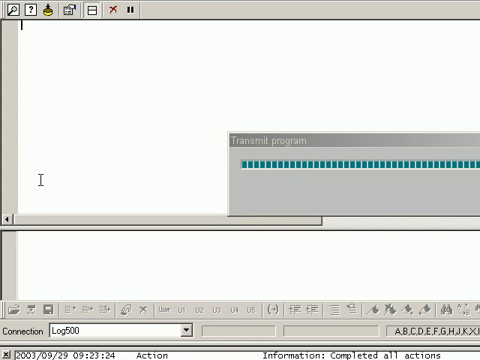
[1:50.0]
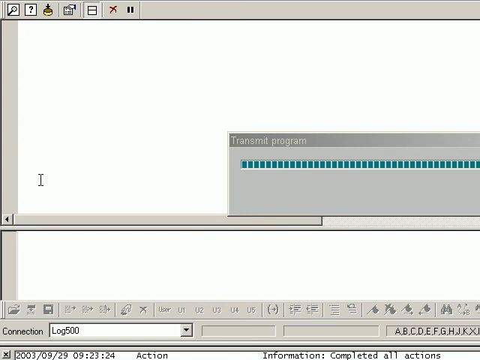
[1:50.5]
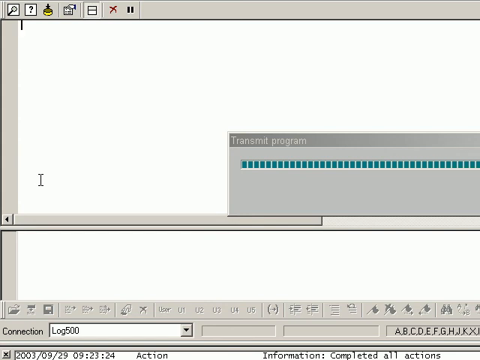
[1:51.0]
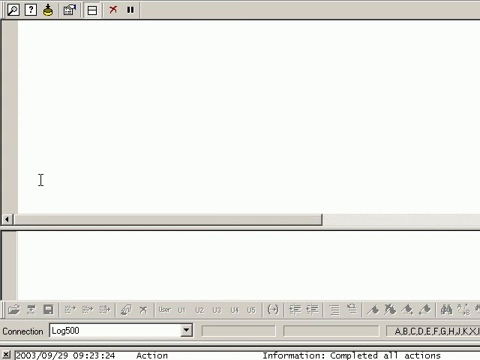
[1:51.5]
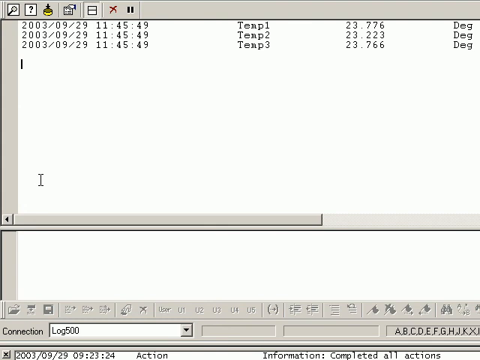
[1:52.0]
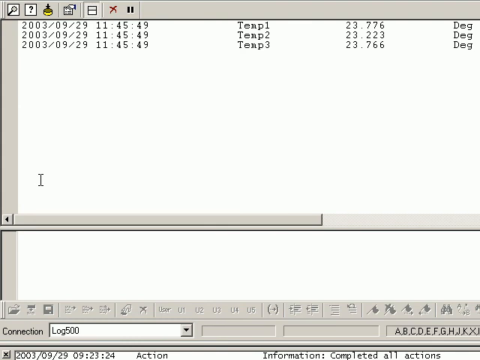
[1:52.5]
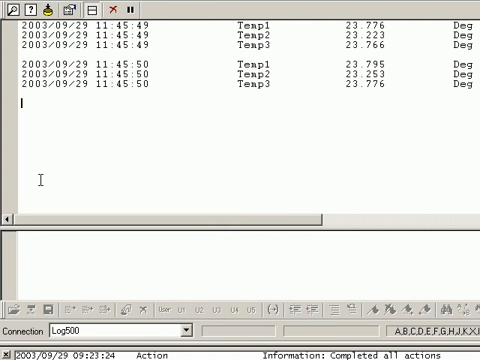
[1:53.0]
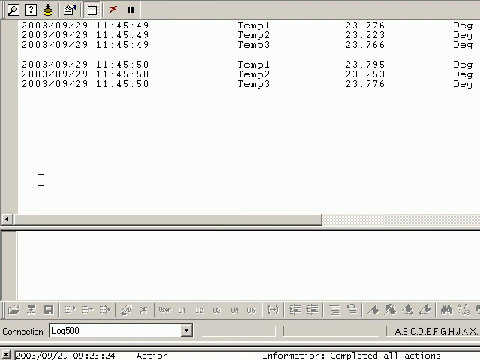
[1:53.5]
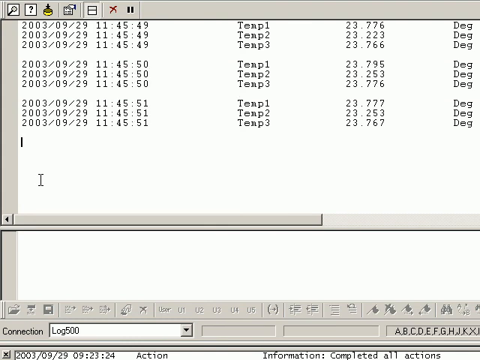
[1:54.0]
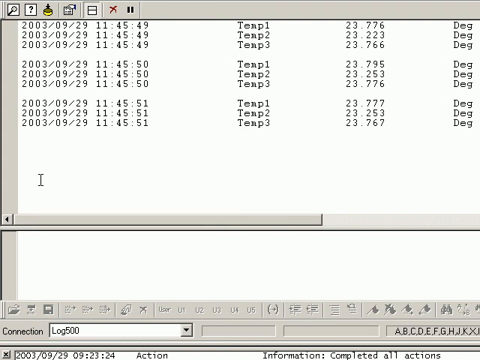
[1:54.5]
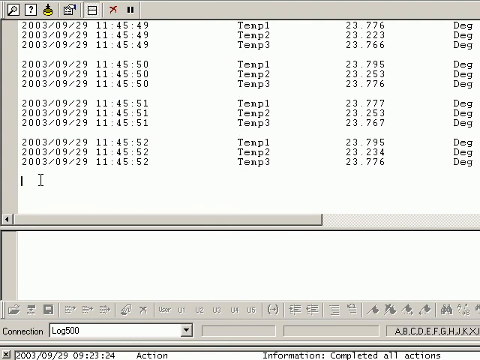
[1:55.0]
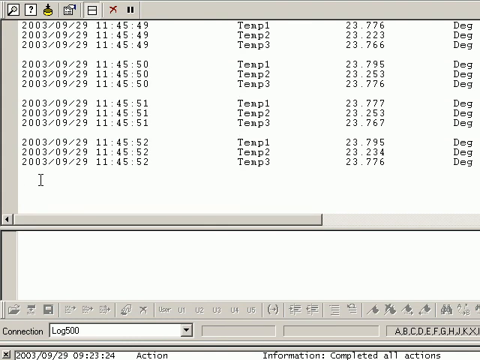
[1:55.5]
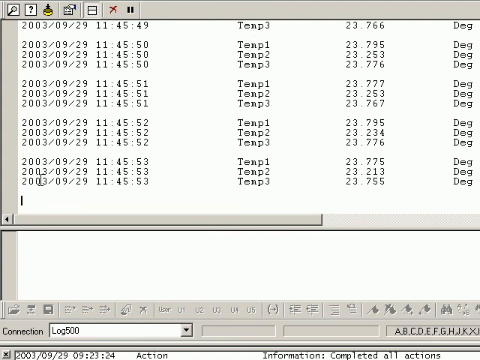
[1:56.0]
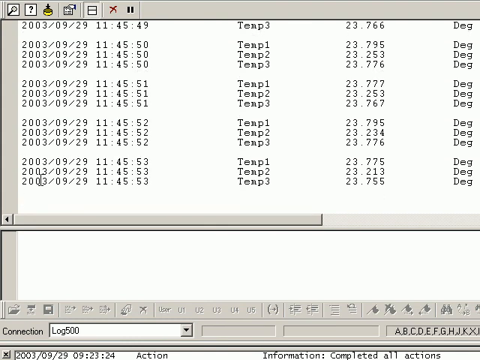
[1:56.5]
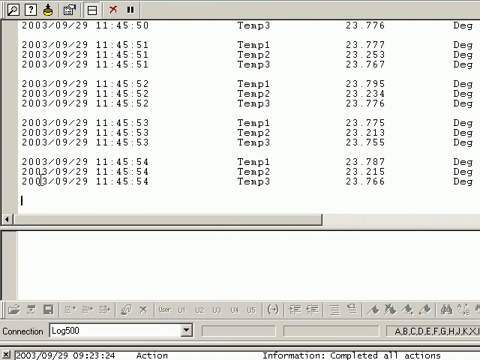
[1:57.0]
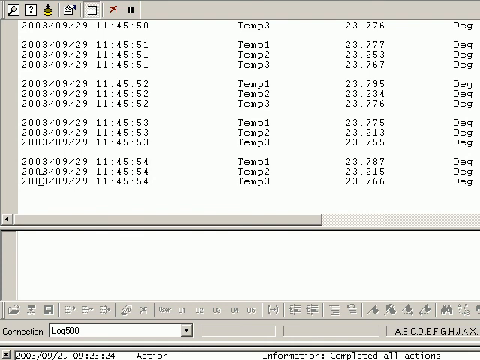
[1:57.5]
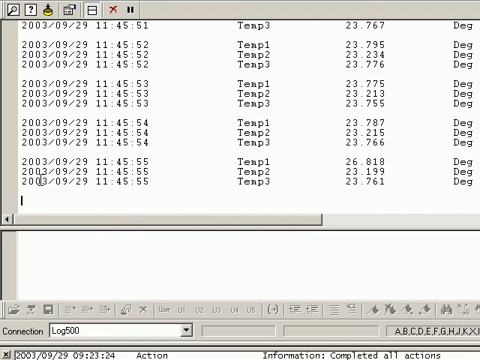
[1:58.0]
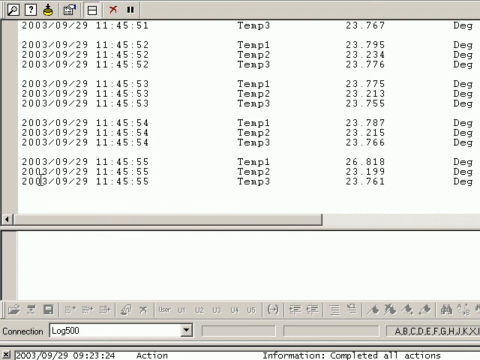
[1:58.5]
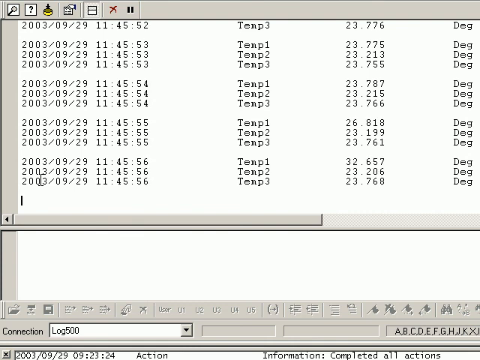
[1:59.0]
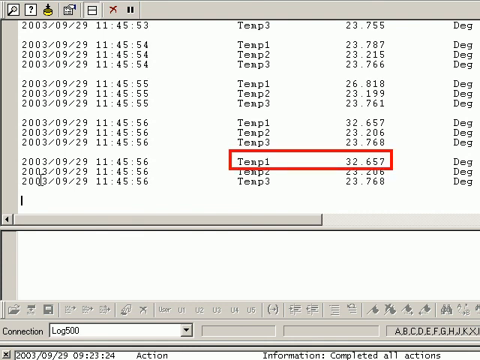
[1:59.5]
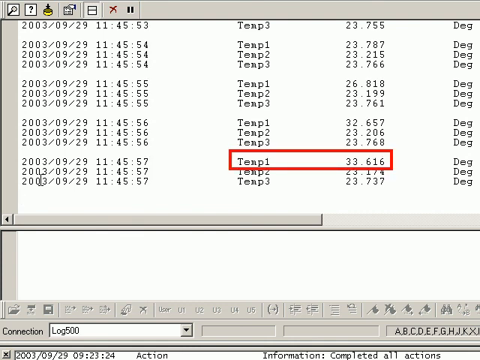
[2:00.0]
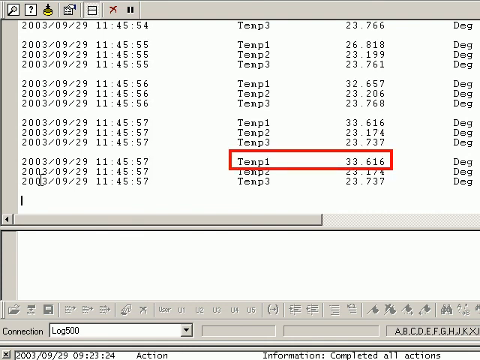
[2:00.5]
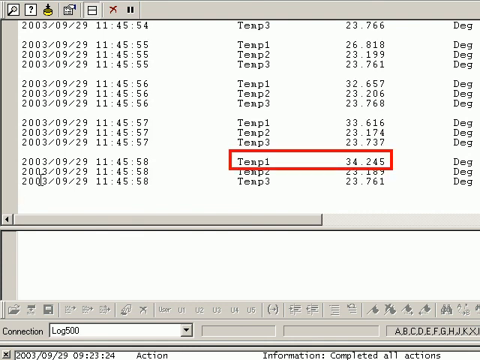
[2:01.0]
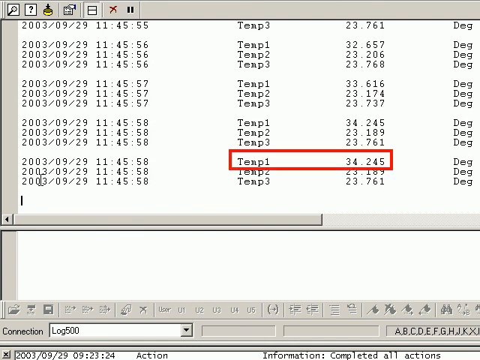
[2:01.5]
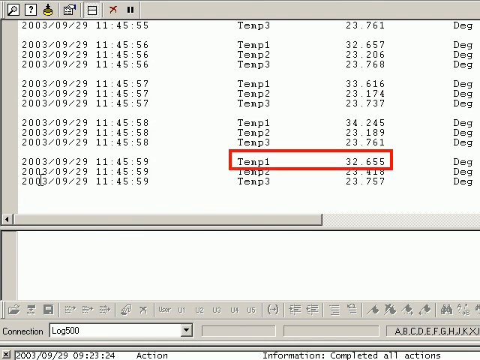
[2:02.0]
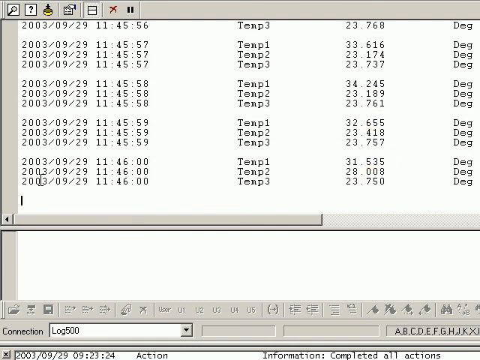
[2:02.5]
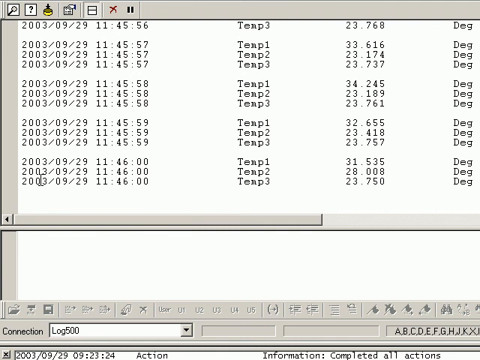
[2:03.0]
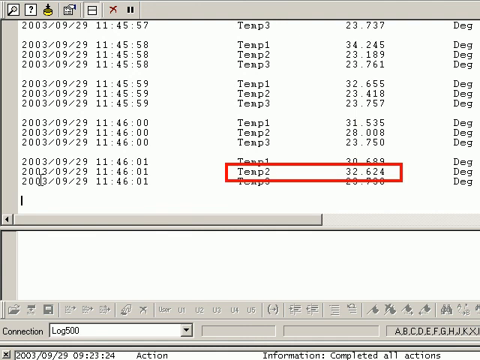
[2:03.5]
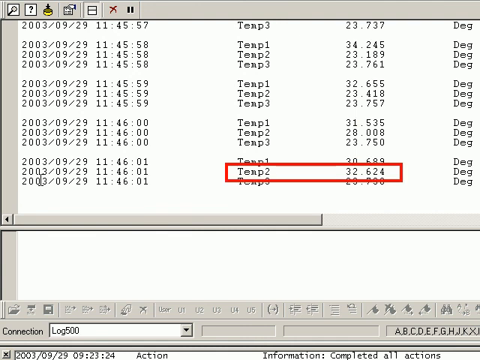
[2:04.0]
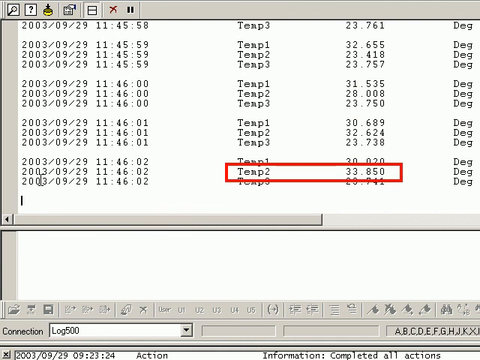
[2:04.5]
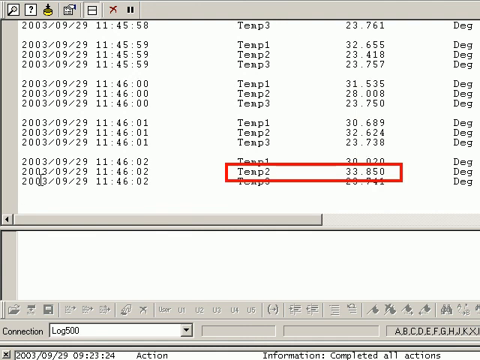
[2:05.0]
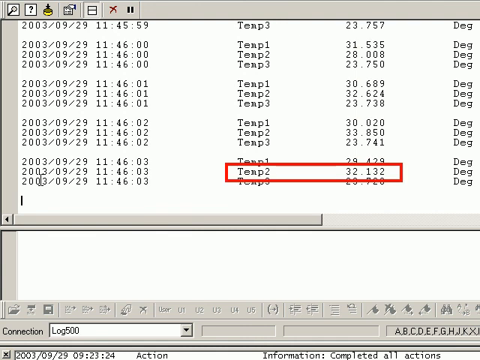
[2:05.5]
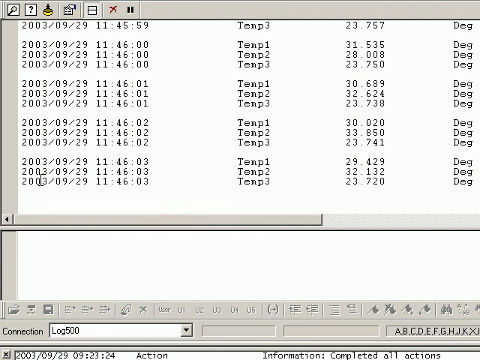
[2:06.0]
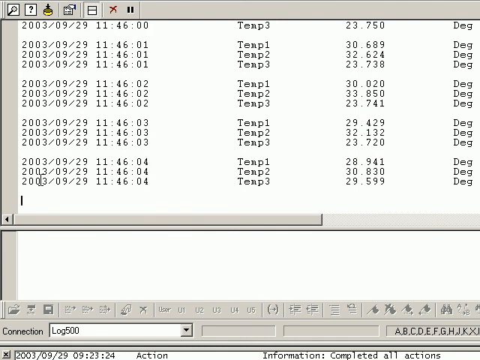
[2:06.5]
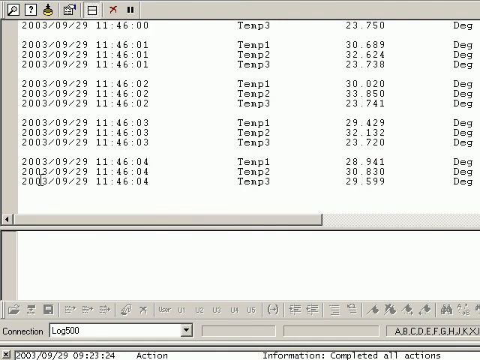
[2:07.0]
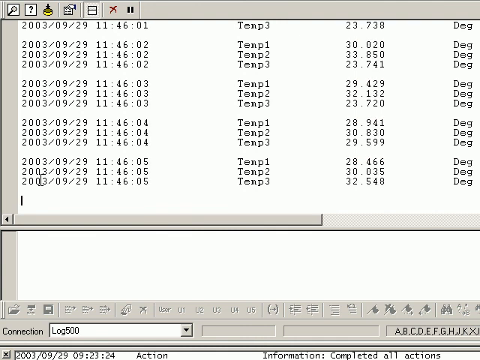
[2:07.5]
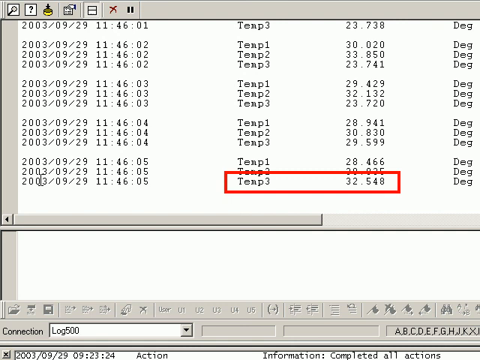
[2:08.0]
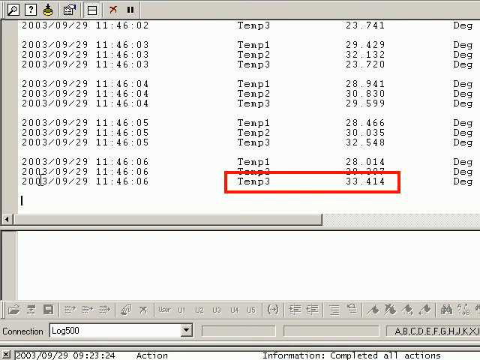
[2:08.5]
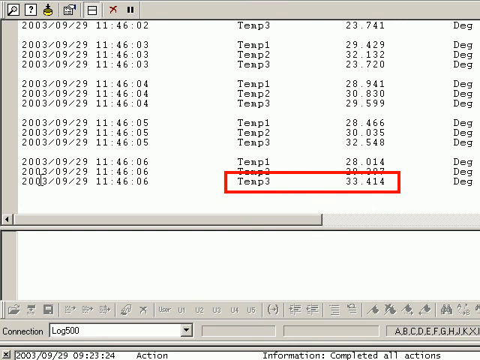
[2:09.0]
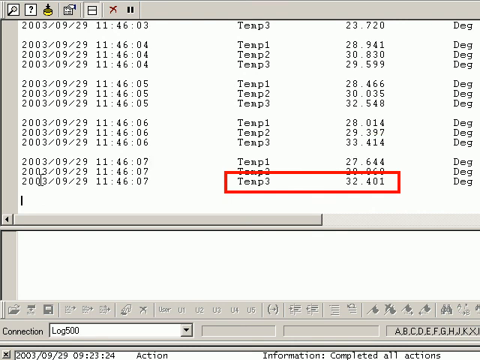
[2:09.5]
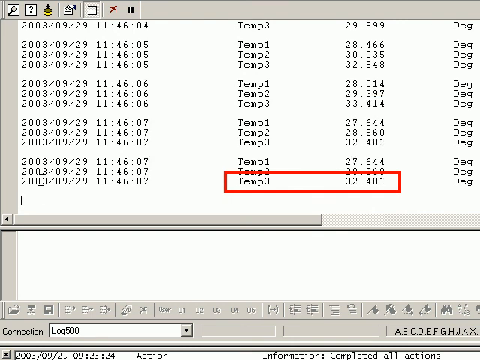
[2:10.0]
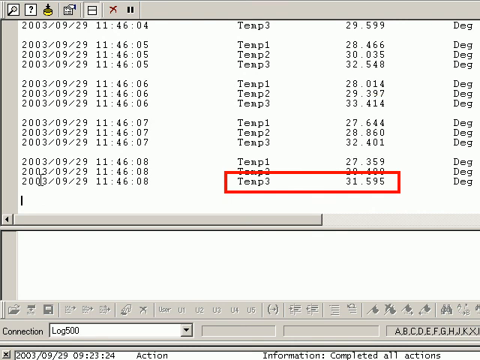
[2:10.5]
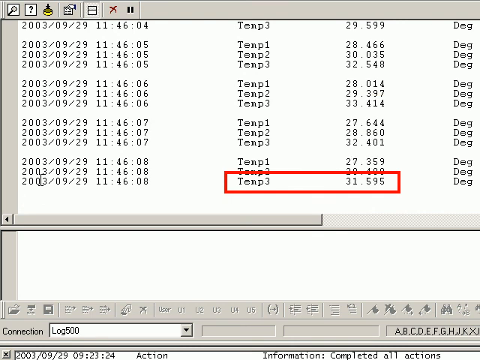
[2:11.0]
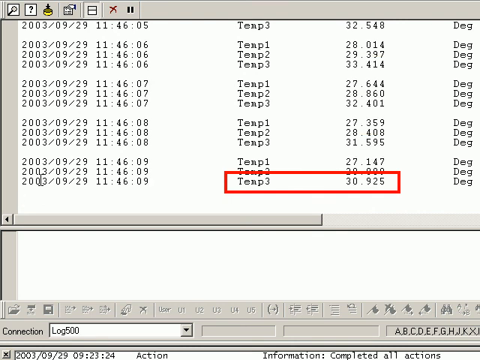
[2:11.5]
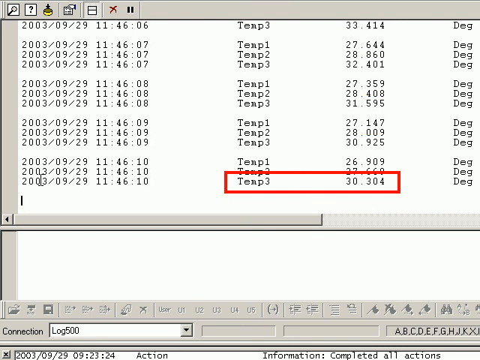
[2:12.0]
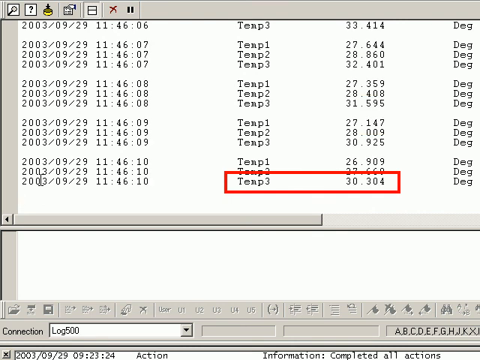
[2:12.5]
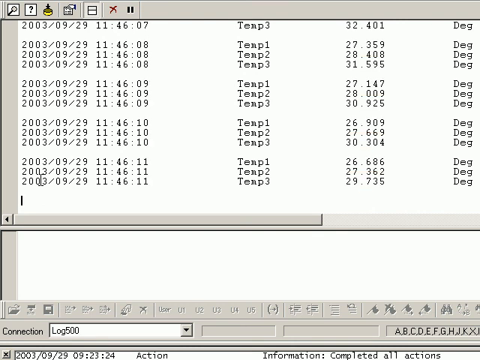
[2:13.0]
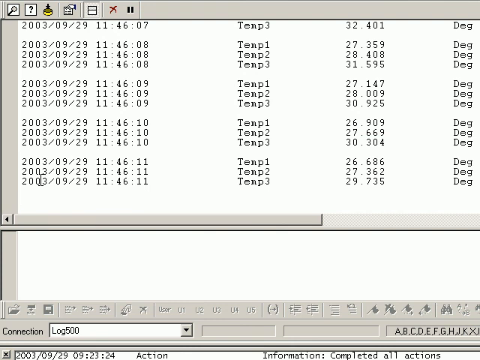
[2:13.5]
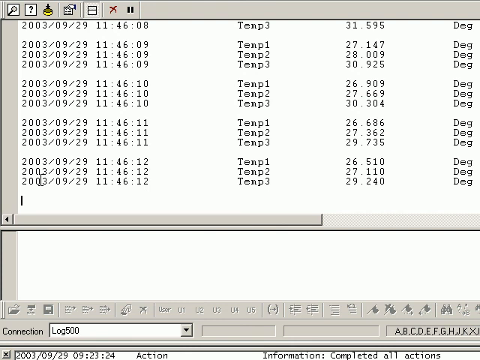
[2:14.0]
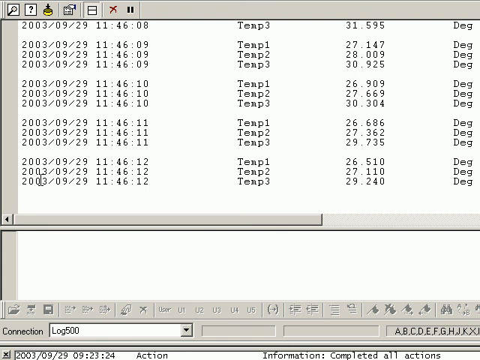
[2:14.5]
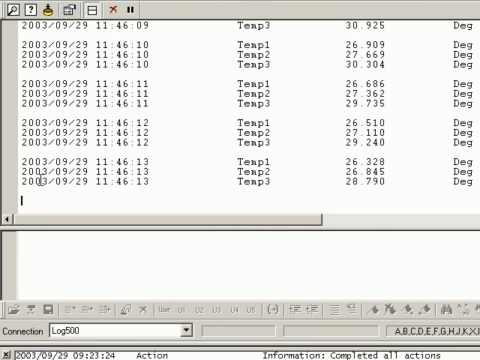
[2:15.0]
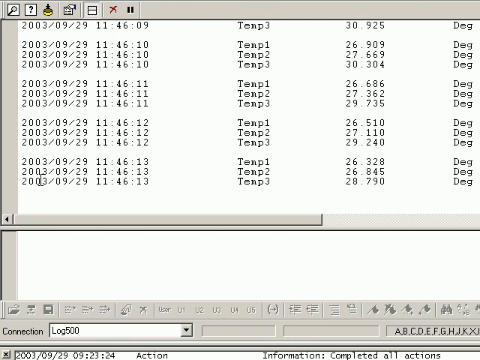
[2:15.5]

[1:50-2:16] The transmit finishes loading, and the tables load up again with the date, temp one, two and three, and their degree readings. Each of temp one, two and three is repeated three times, forming three separate tables about a centimeter apart, and new entries keep popping out repeatedly. A thick red rectangle appears around the words "temp one, 34.245", probably edited in later for highlighting. The red box then highlights temp two, 32.624, staying on temp two as the numbers keep flashing and changing. Next it highlights temp three, 32 point something, which then changes. The red rectangle then highlights temp one again. The temperatures fluctuate between the high 20s and low 30s for temp one, and the same for temp three.